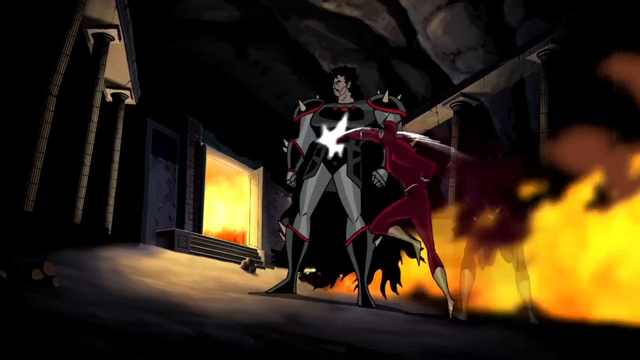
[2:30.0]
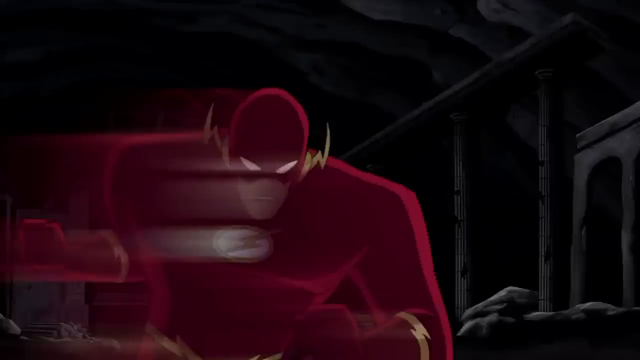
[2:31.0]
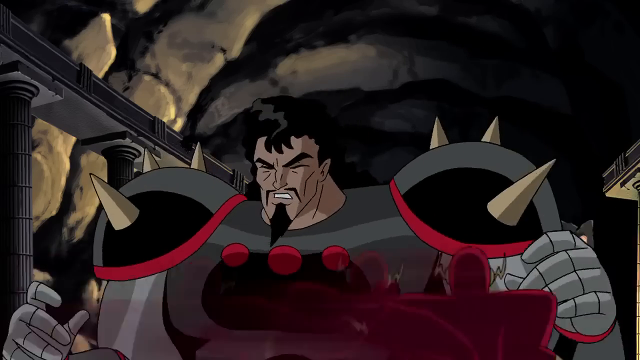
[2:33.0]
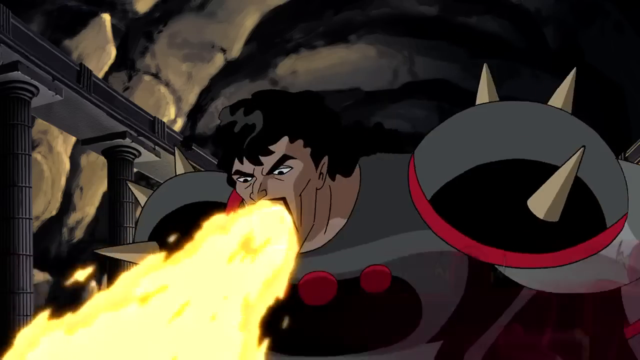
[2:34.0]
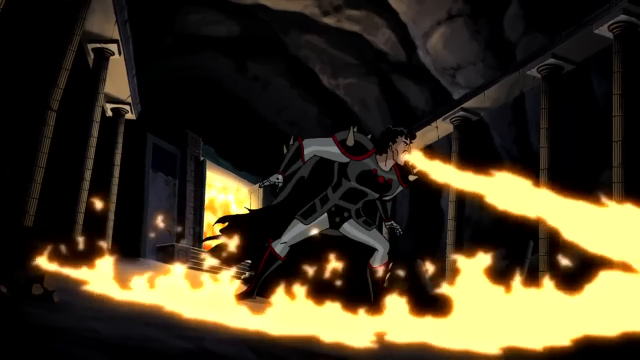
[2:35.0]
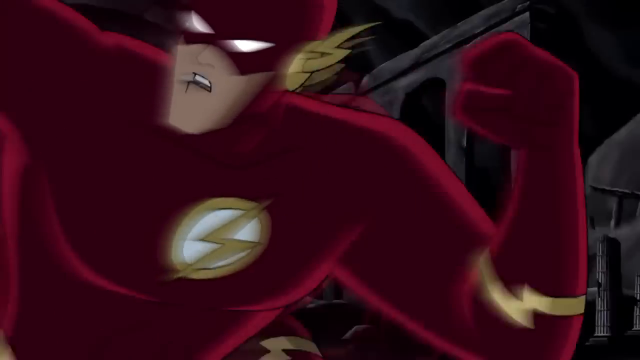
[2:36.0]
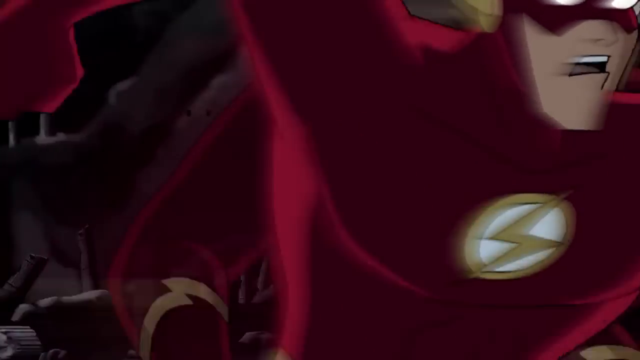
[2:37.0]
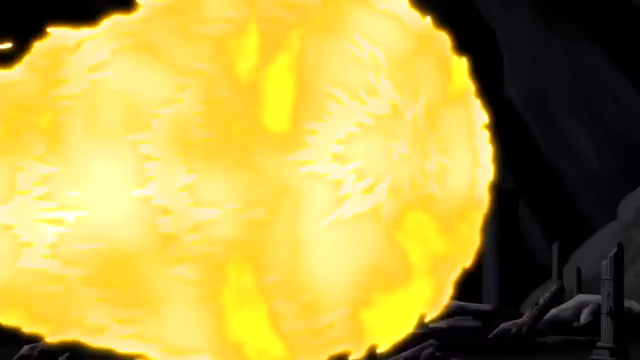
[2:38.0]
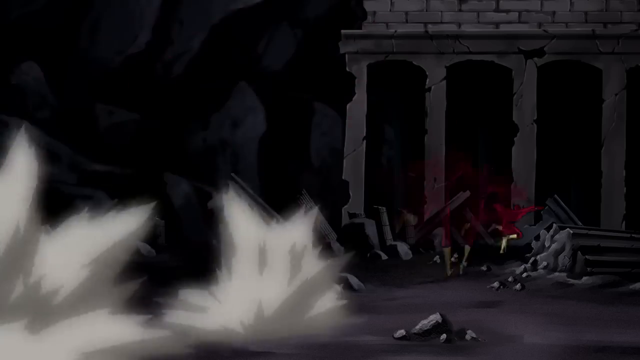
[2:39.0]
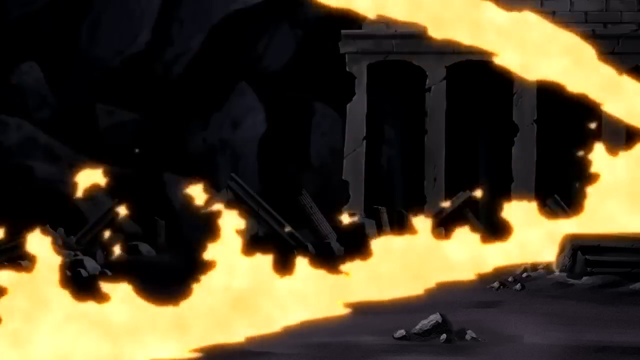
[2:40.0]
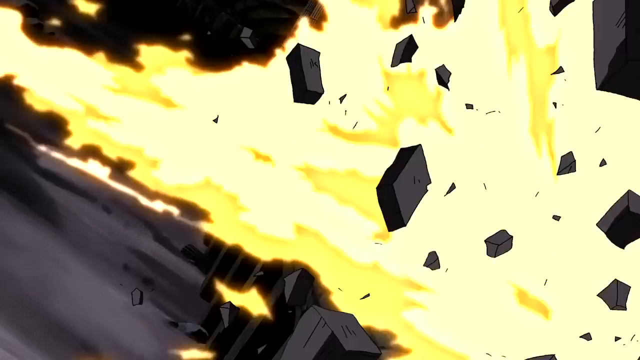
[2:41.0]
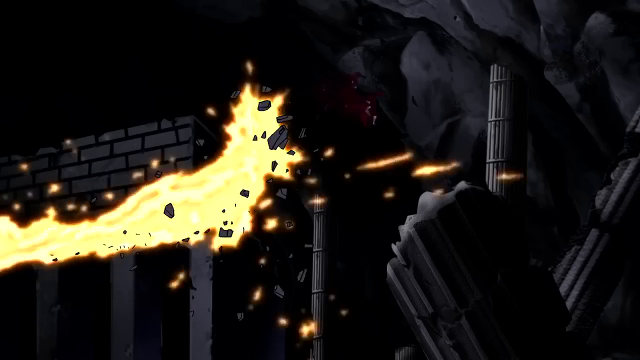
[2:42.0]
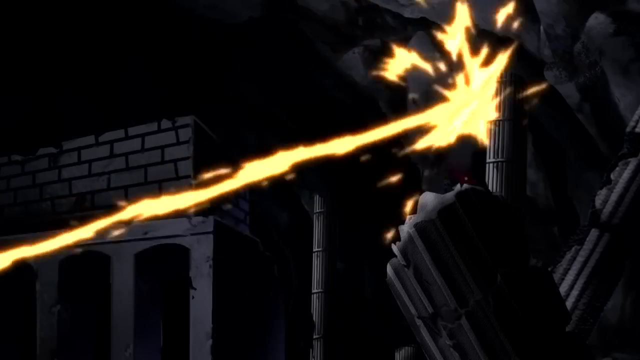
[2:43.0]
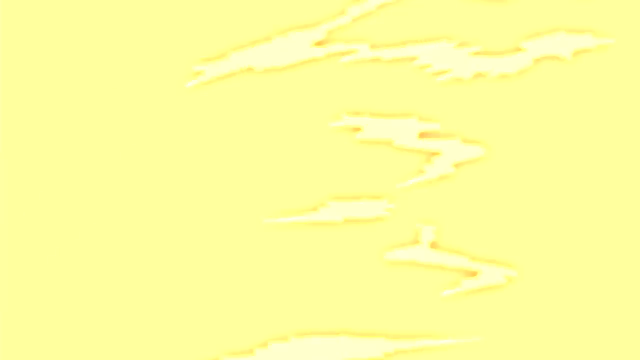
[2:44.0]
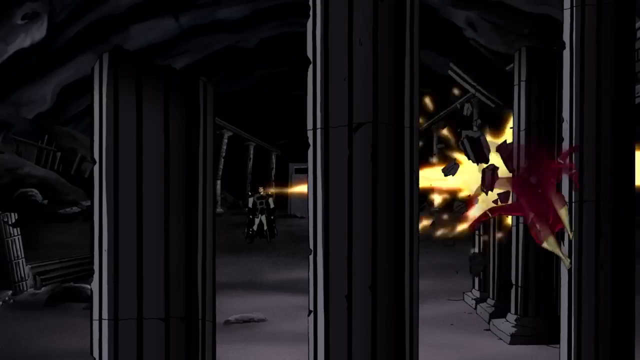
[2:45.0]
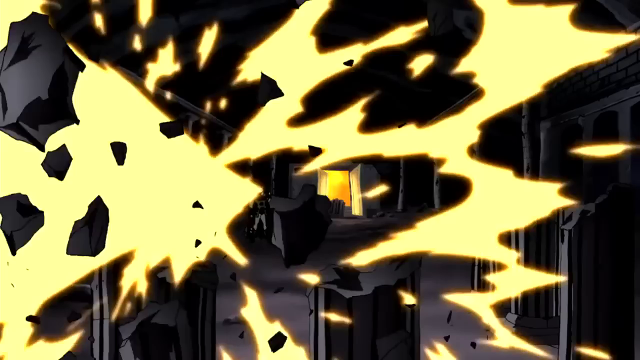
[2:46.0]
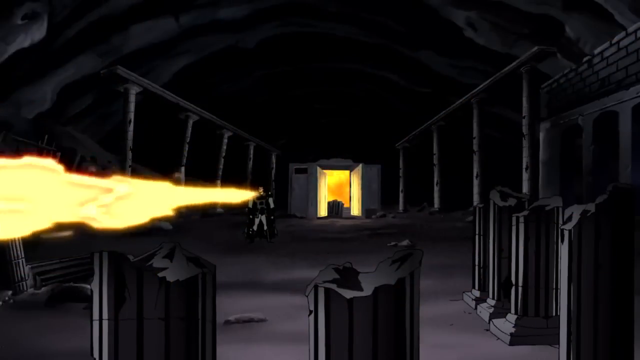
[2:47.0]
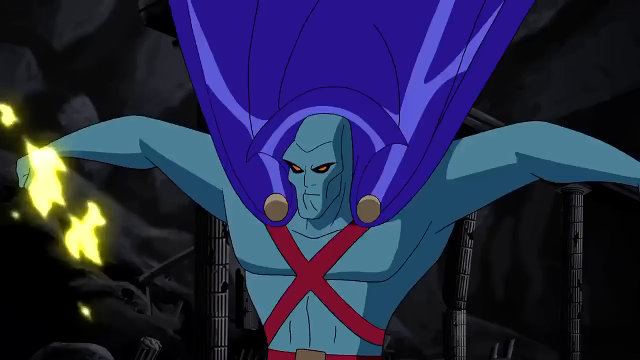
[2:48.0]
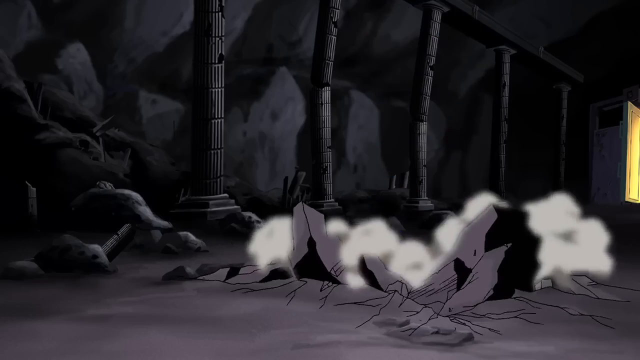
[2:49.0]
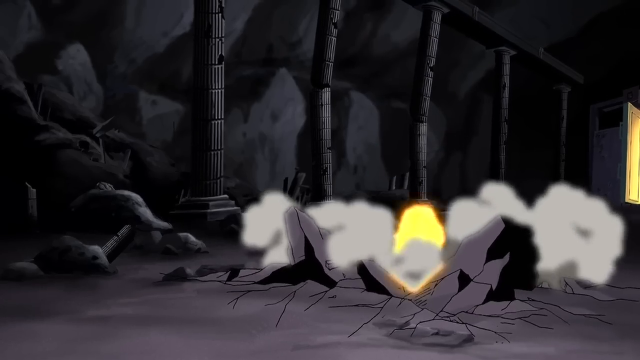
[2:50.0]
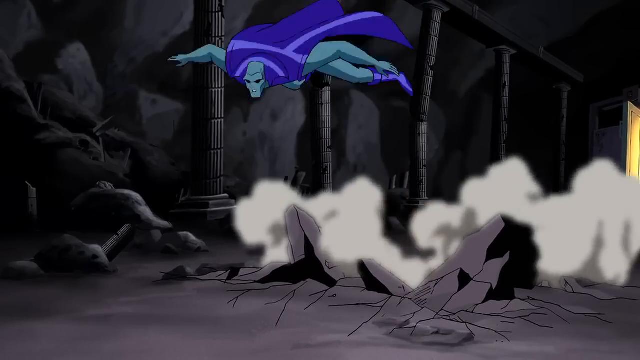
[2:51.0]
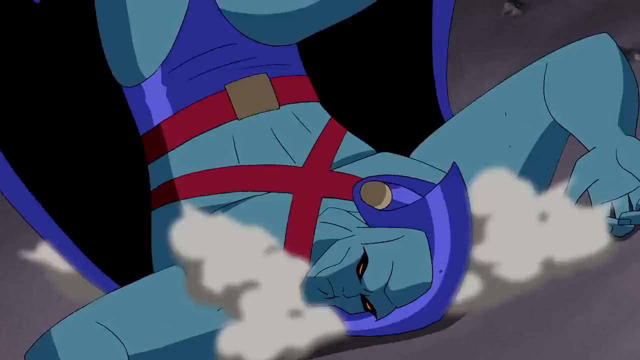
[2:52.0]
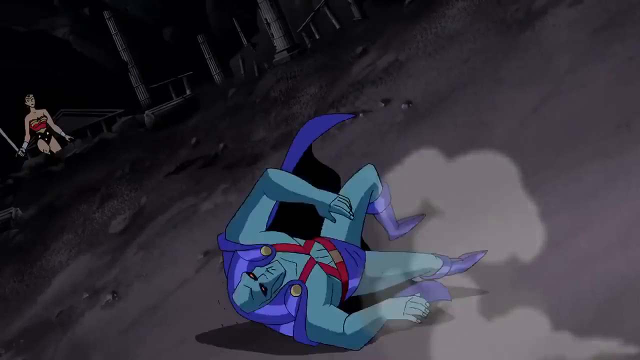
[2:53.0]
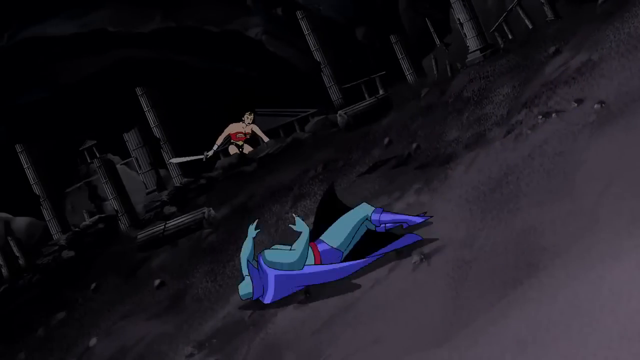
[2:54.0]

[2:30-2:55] The villain in the black, silver, gray and red outfit is still standing strong and looks around. There appears to be a small character to his left who looks like they wear a burgundy fitted outfit and some type of helmet over their head, resembling a black half shell with a red border, with horns sticking out. The villain blows fire out of his mouth and chases the red superhero in the burgundy outfit, blowing fire behind him; the superhero tries to get away, but the fire keeps coming. Smoke is everywhere in the dungeon. The blue superhero also tries to get away from the fire. He drops to the ground, rolls over several times, and when he stops rolling he lands on his stomach with his arms underneath his head and the soles of his feet facing up toward the ceiling of the dungeon.